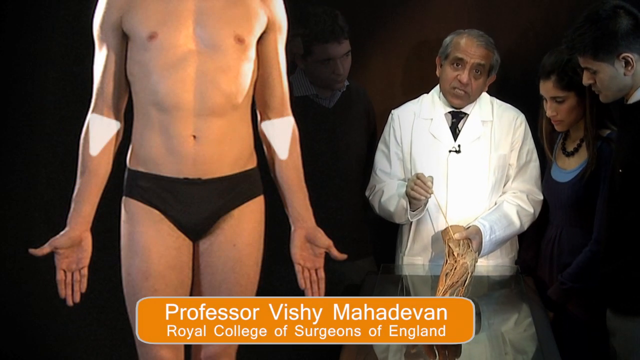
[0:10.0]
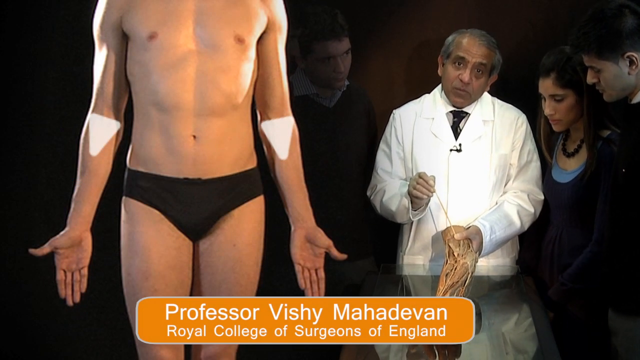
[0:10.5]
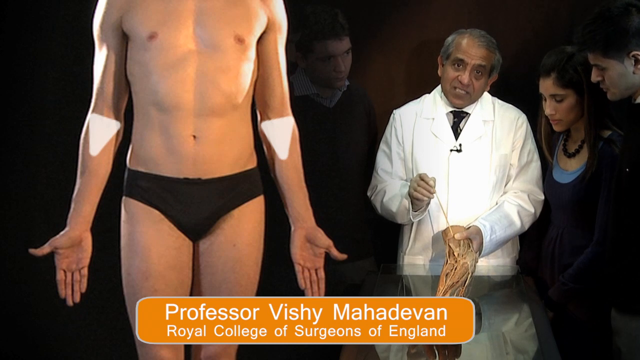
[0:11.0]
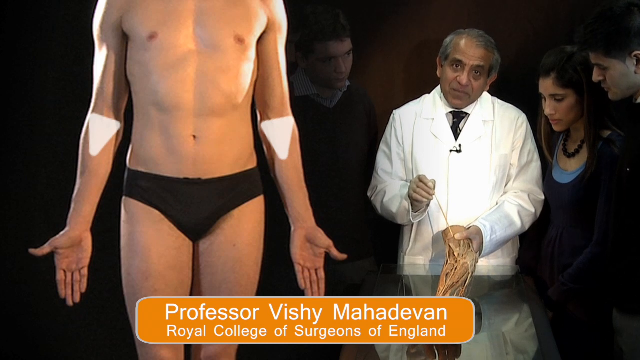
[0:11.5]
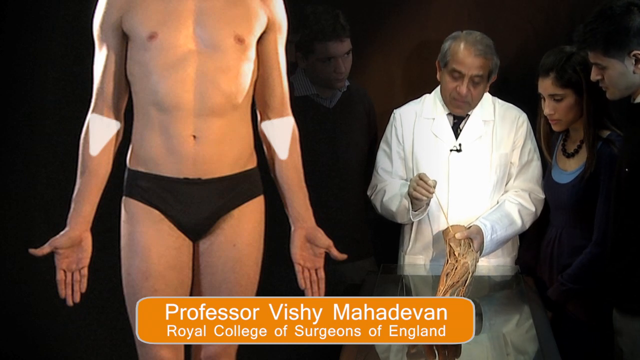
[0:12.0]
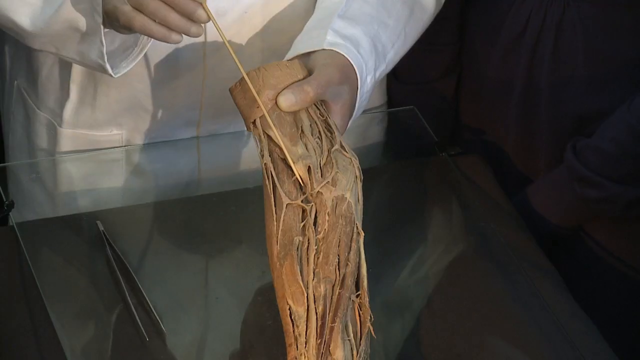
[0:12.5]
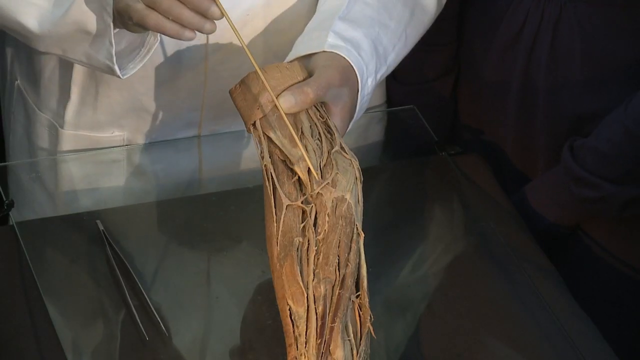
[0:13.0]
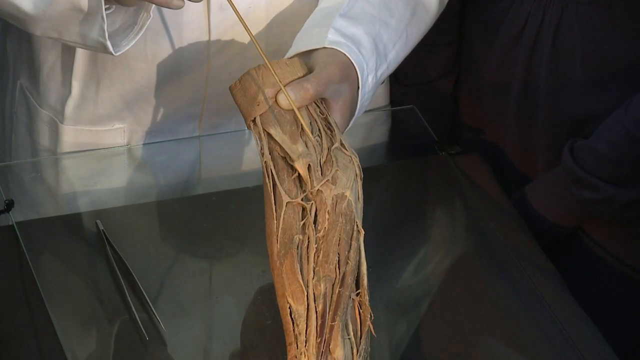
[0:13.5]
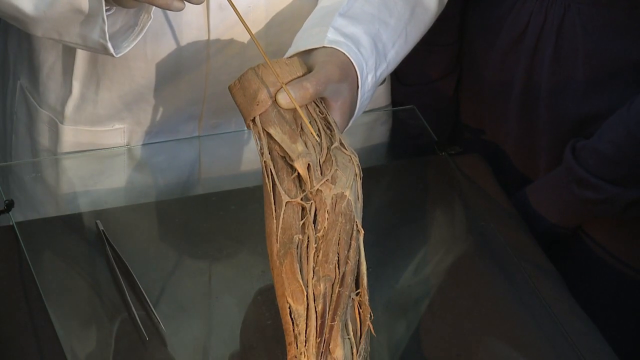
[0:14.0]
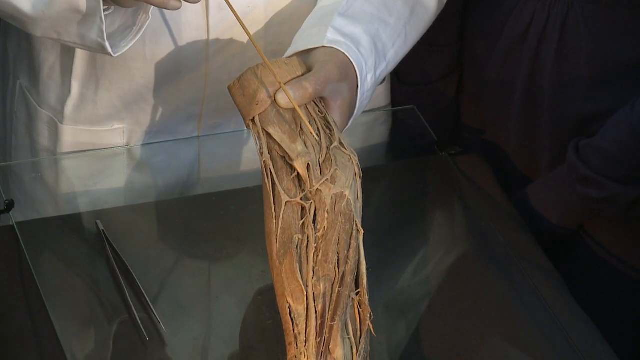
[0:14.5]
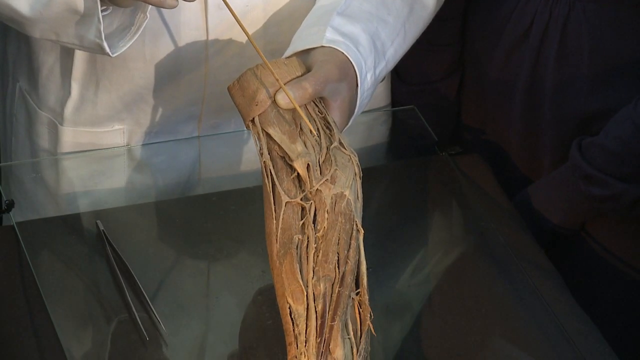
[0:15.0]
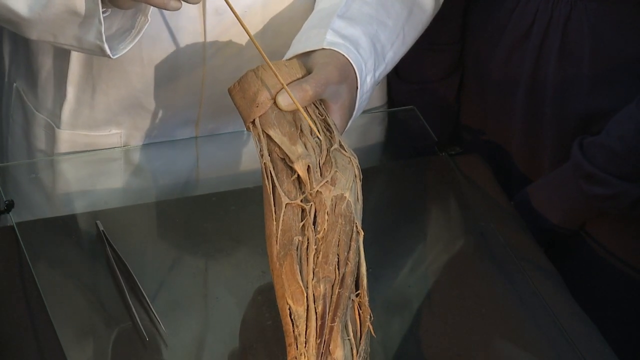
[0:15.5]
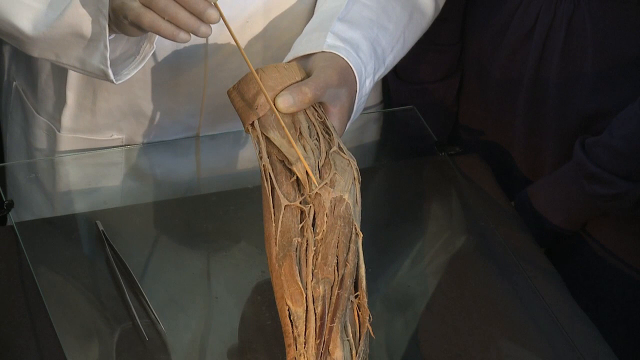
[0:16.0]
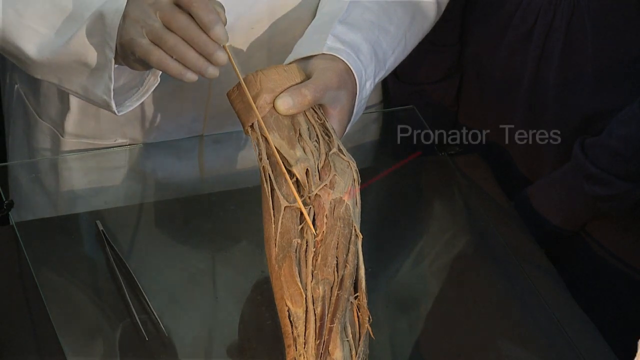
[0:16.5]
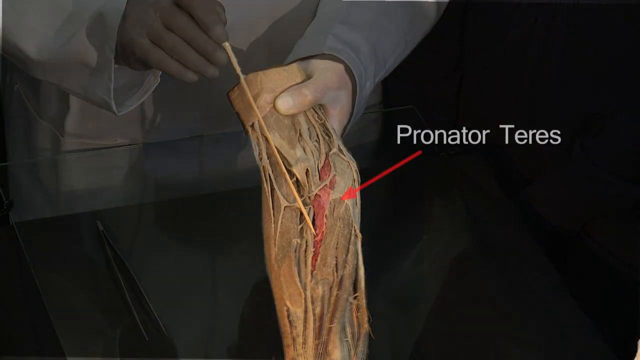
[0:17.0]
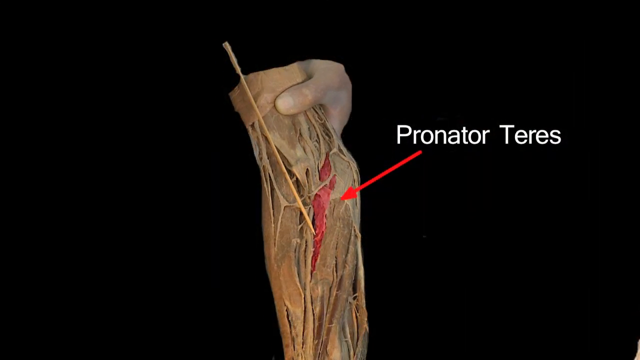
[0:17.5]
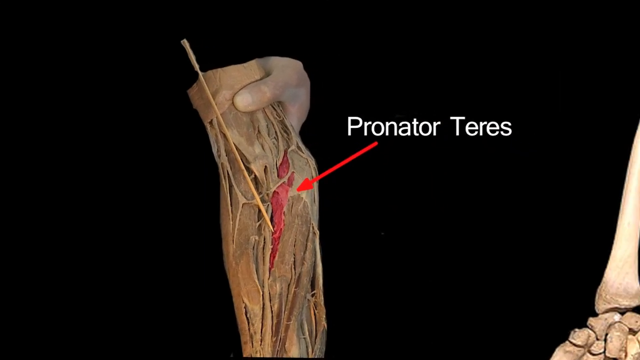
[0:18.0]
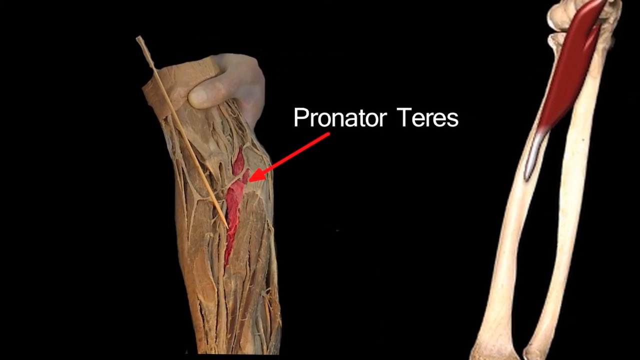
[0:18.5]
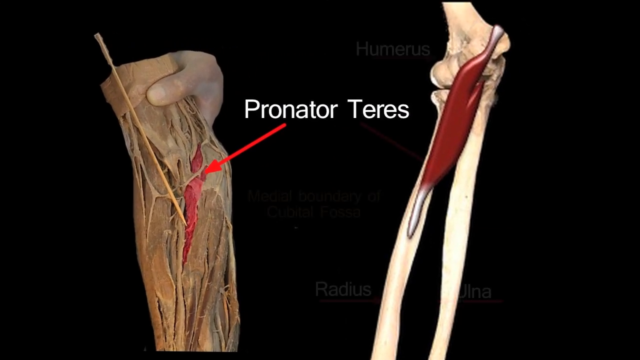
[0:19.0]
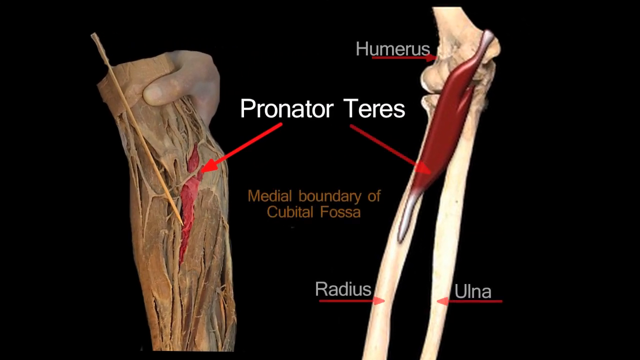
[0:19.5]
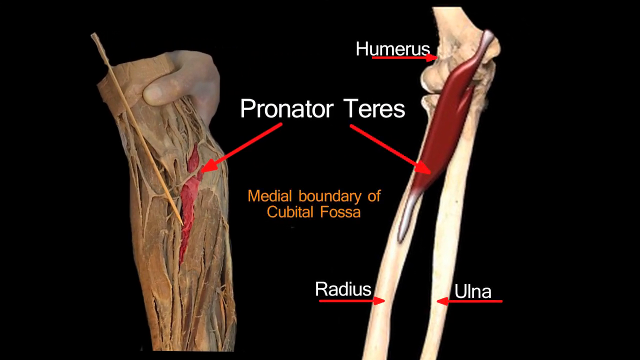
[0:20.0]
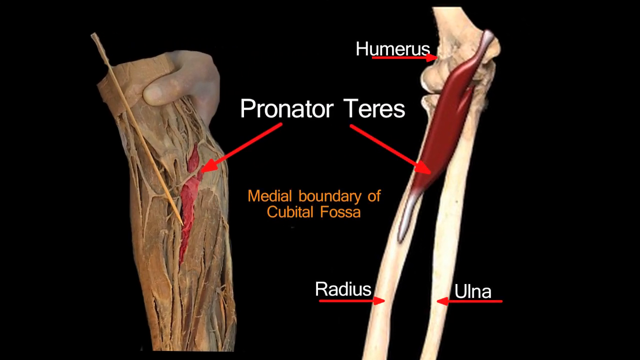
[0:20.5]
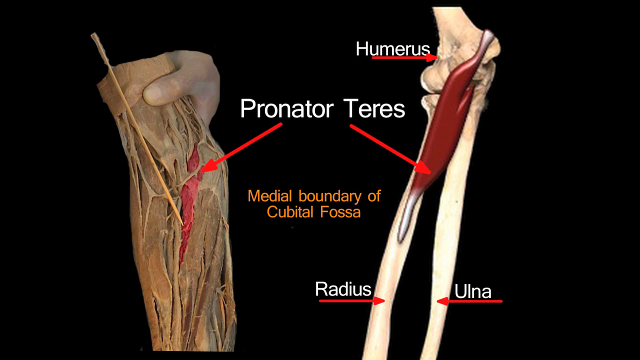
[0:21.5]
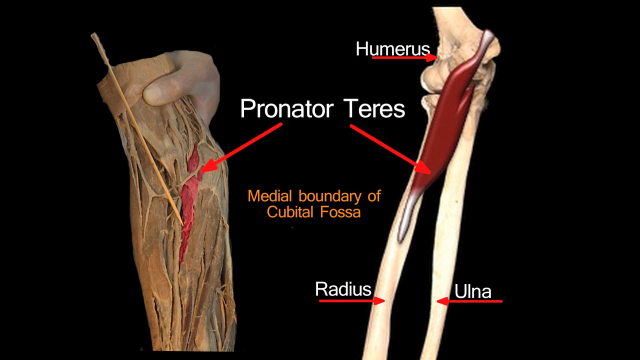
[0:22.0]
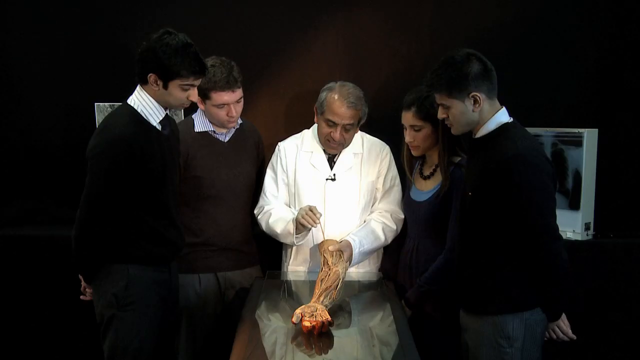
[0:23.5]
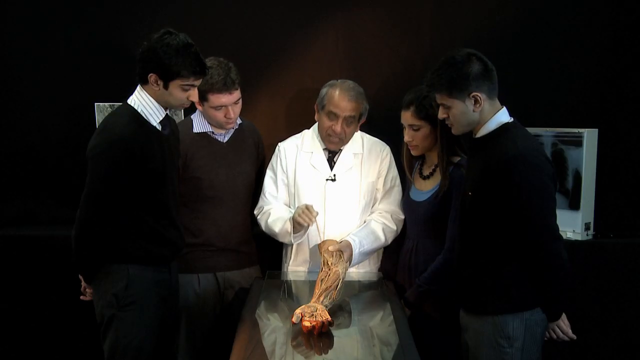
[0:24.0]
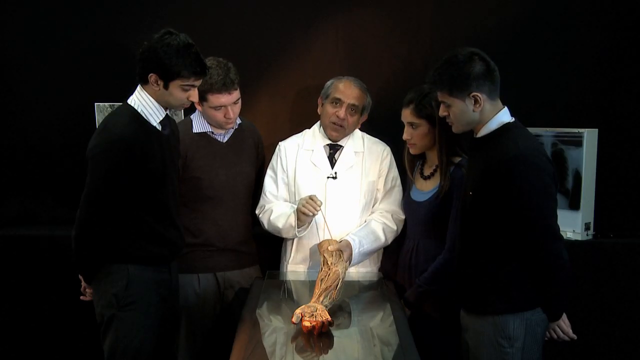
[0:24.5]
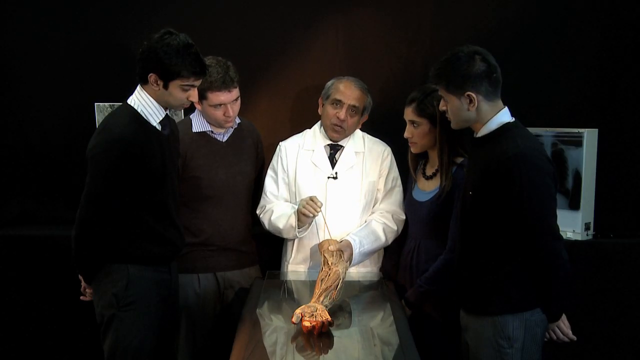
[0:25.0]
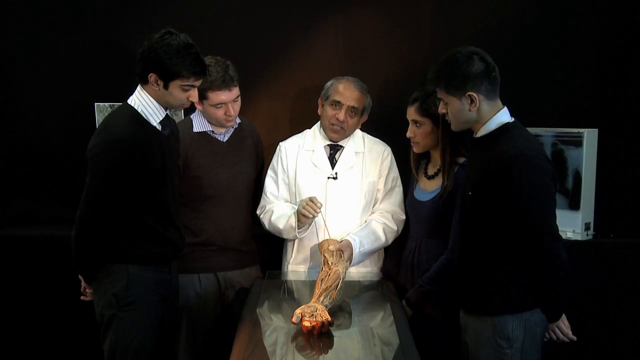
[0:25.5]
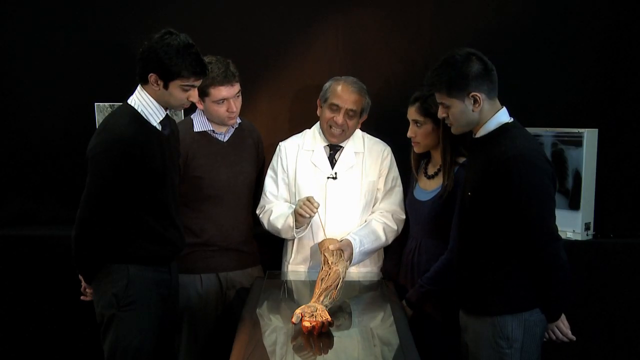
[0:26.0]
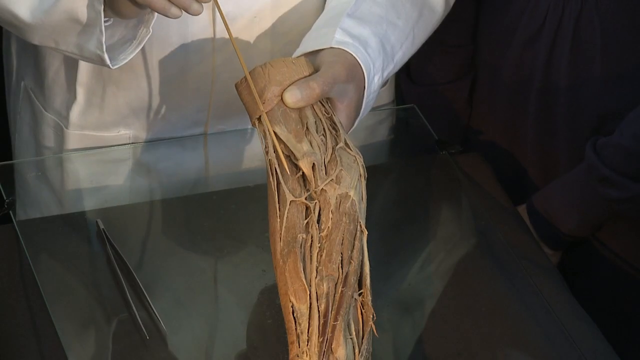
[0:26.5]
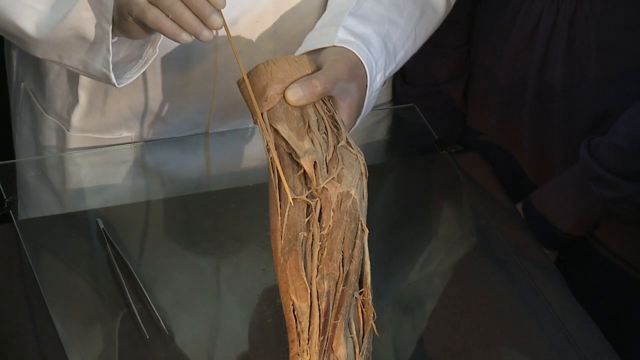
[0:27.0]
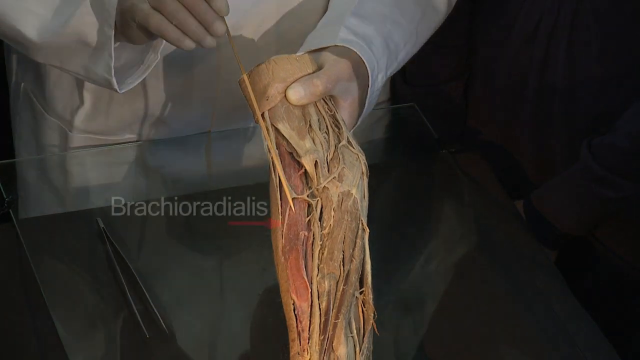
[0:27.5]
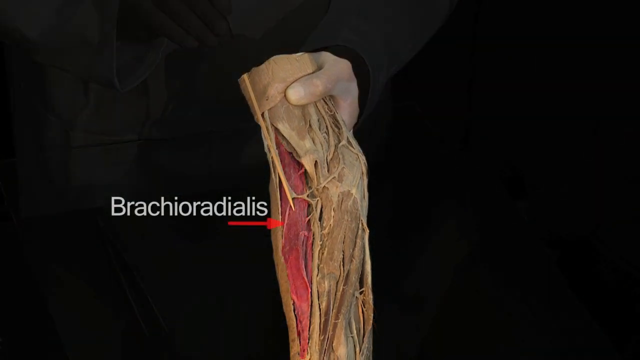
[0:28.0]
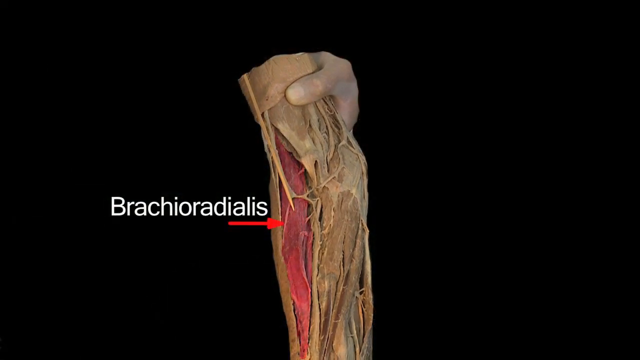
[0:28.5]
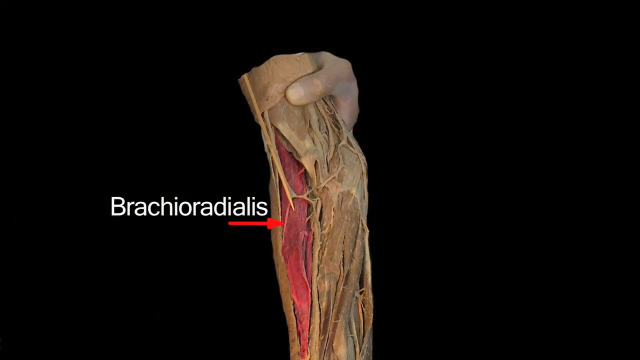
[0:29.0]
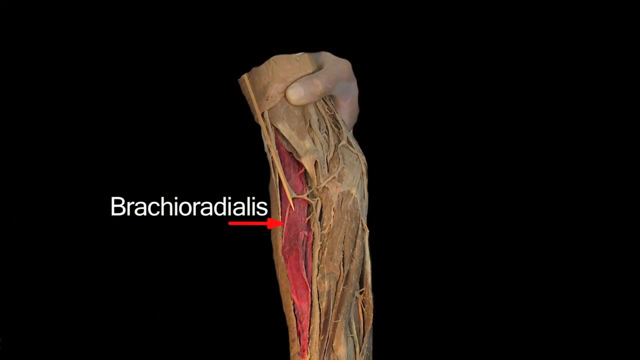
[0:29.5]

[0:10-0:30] The professor continues speaking, and a close-up of the arm he is holding is shown. He seems to be referencing the bend of the arm where the elbow is. The arm looks like it is meant to show the veins and muscles, and its brown color makes it look almost like wooden tree bark. The video pauses for an animation that highlights the pronator teres in red, with a red arrow pointing at it. Next to it is an image of bone showing the humerus and the pronator teres from a different angle, the radius and ulna at the bottom, and the medial boundary of the cubital fossa. Both images are on a black background, and in the right image the pronator teres is also highlighted in dark red.